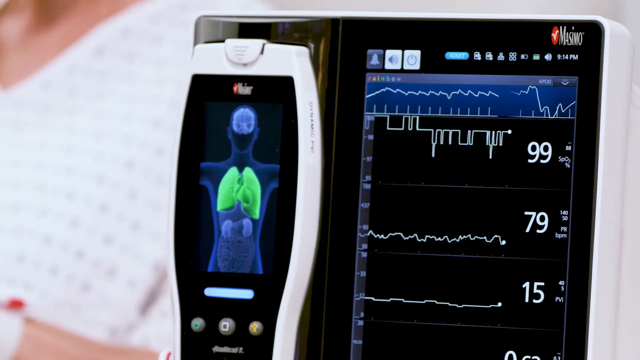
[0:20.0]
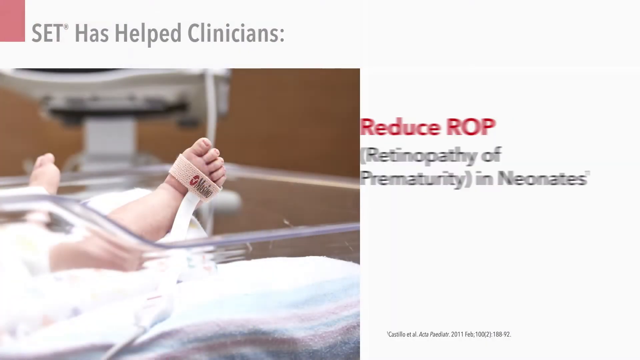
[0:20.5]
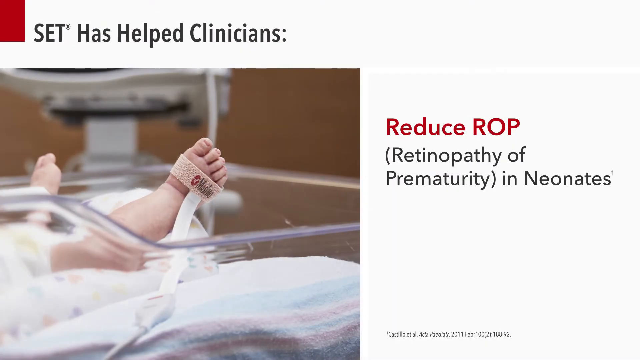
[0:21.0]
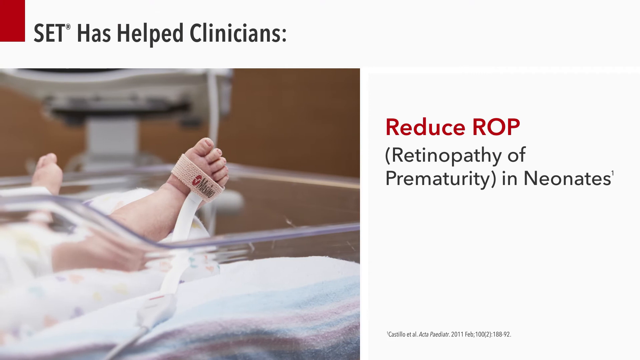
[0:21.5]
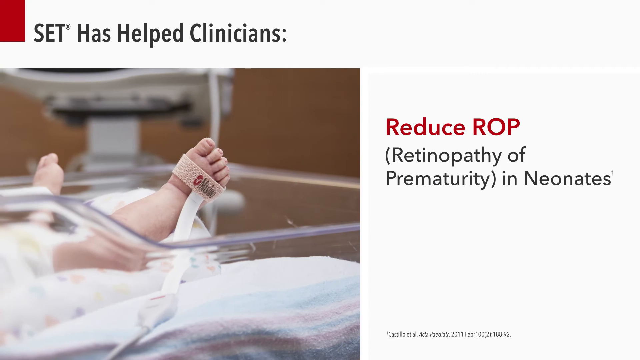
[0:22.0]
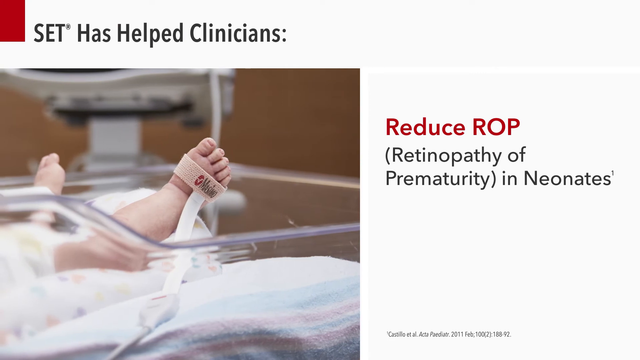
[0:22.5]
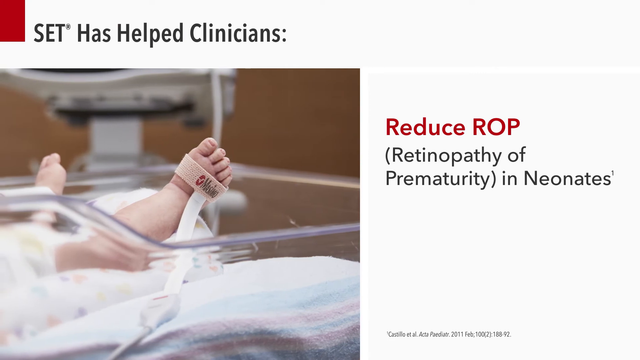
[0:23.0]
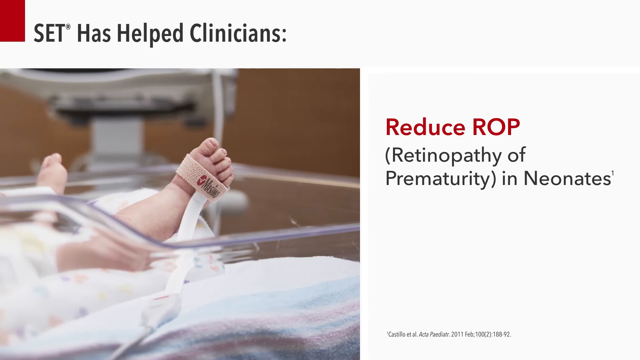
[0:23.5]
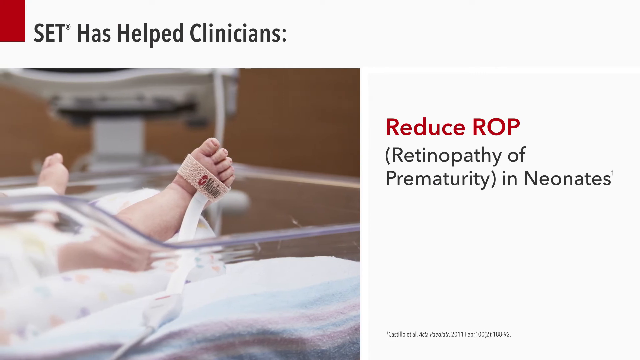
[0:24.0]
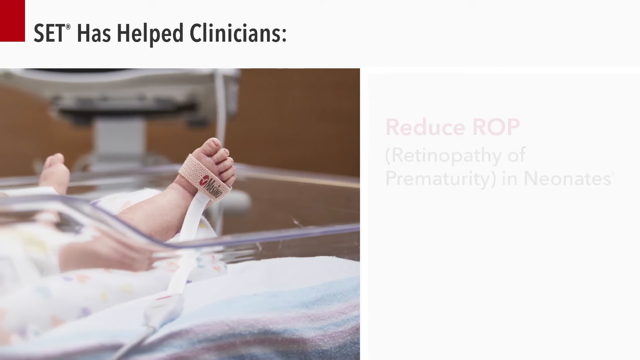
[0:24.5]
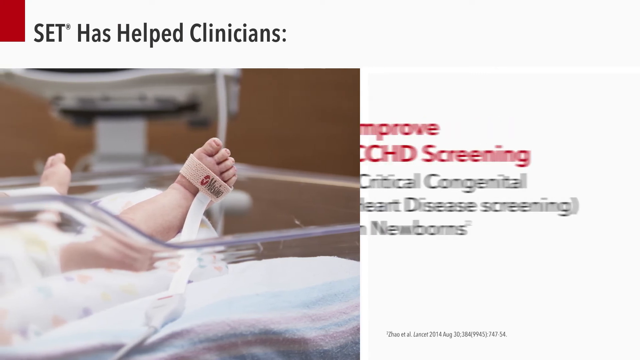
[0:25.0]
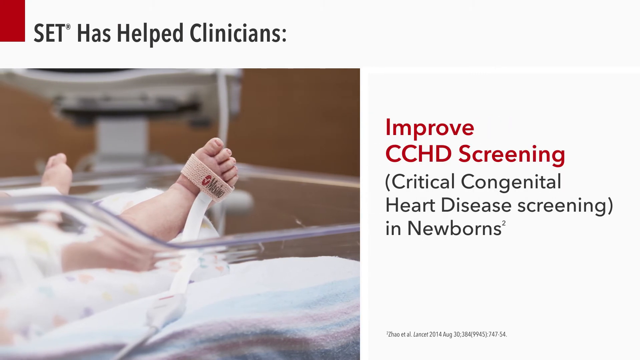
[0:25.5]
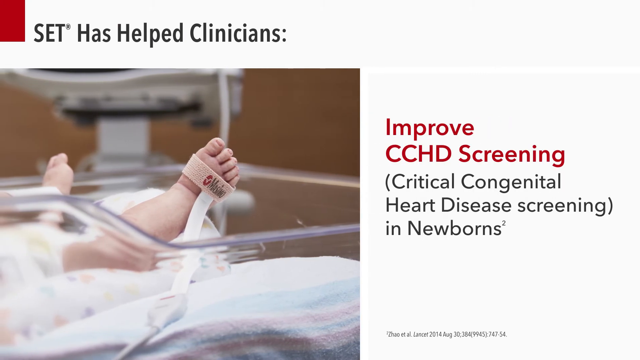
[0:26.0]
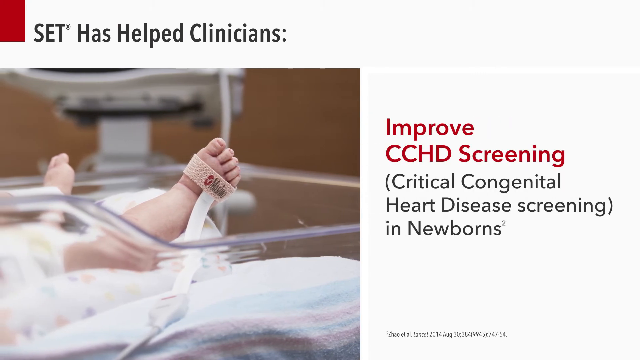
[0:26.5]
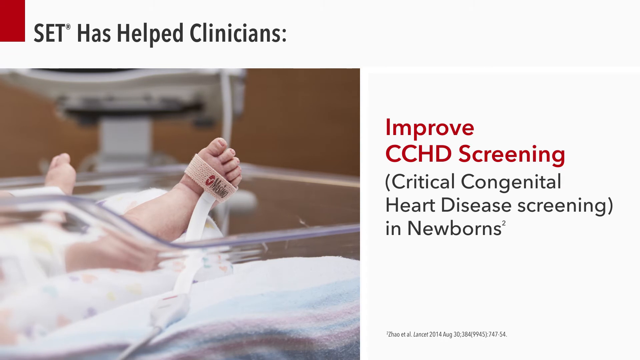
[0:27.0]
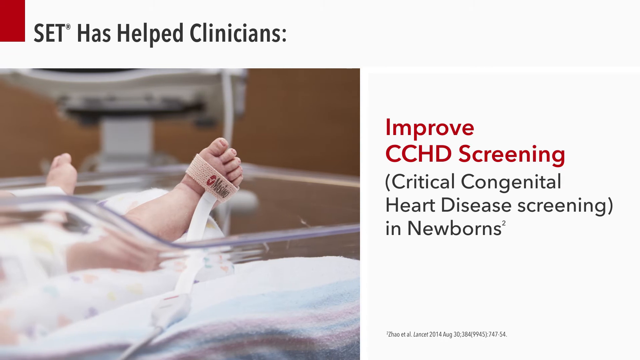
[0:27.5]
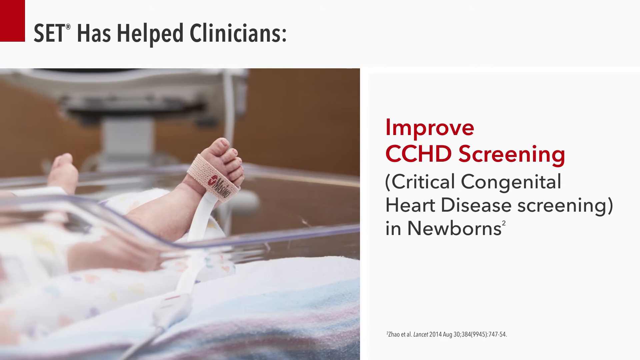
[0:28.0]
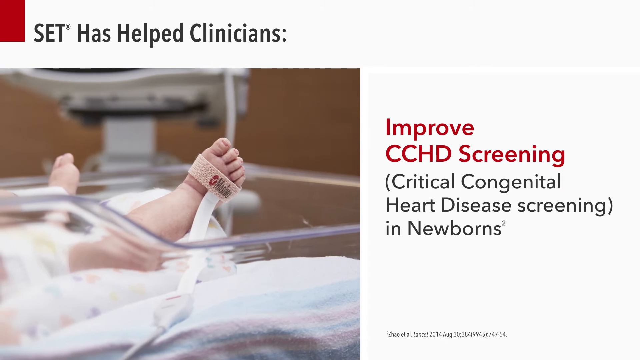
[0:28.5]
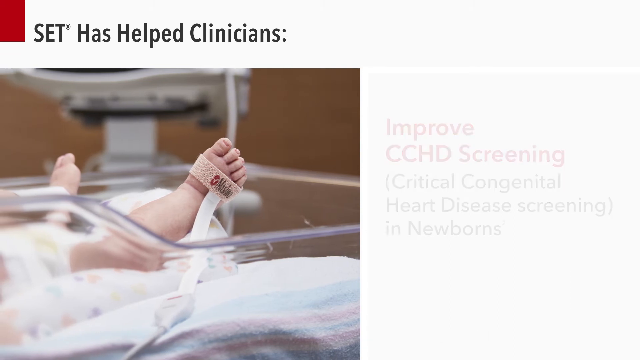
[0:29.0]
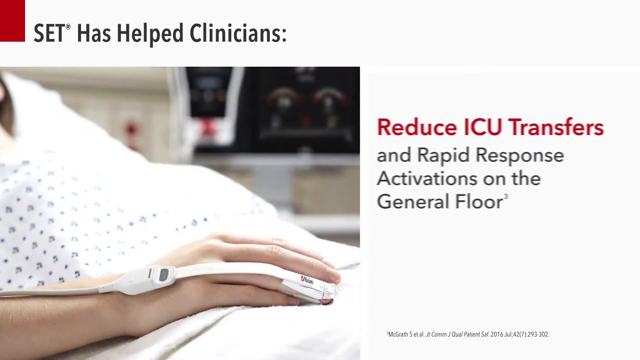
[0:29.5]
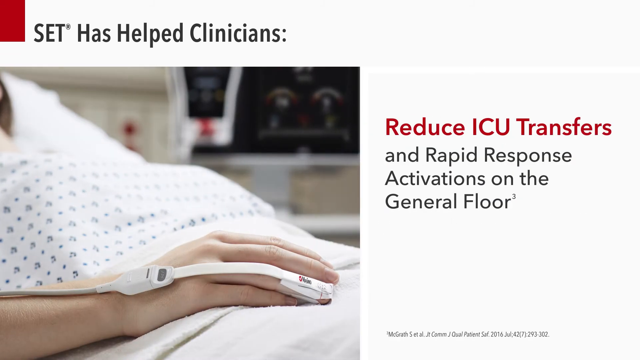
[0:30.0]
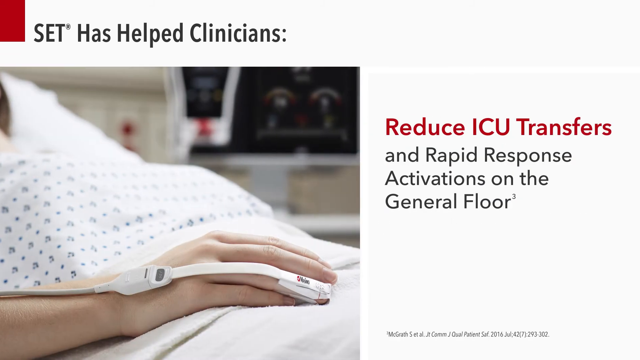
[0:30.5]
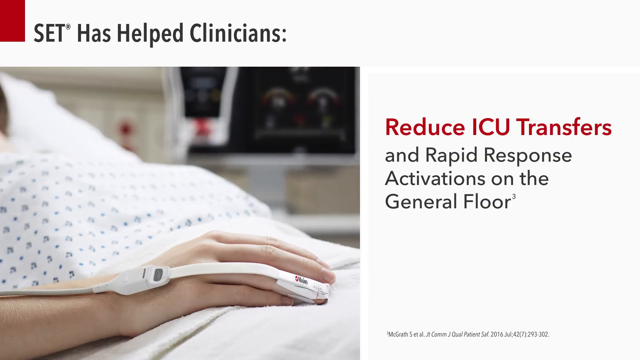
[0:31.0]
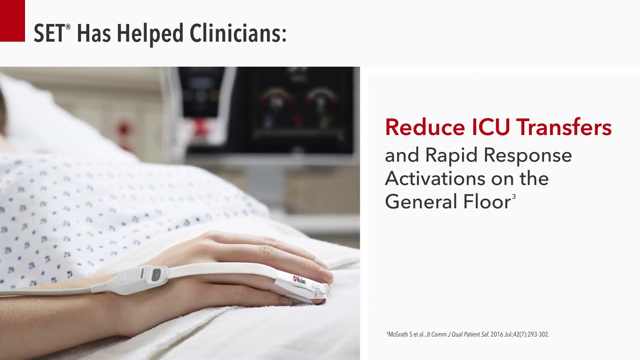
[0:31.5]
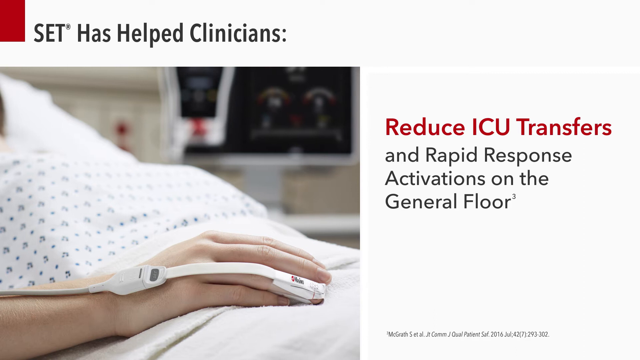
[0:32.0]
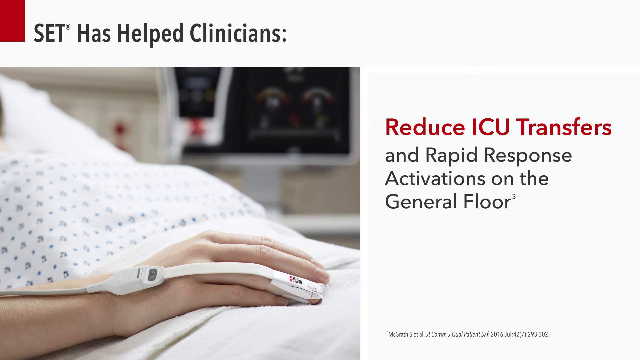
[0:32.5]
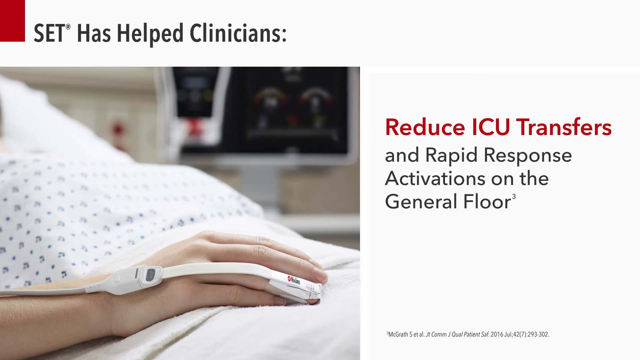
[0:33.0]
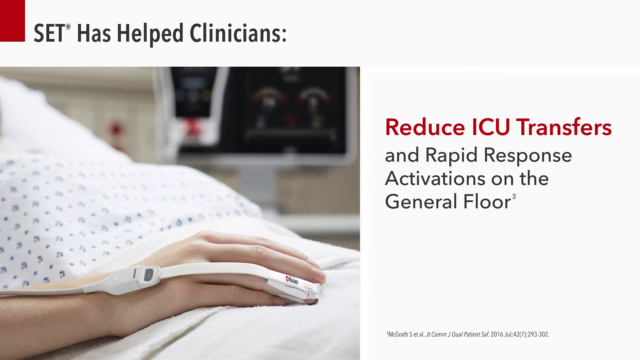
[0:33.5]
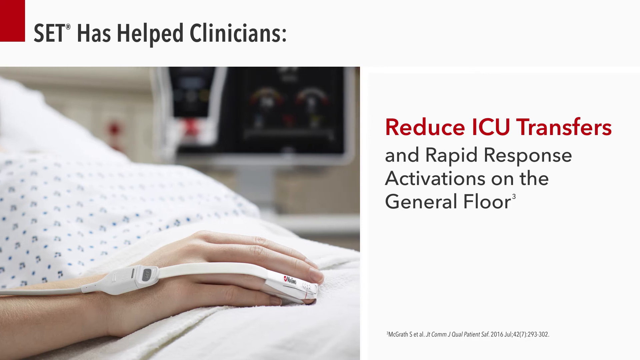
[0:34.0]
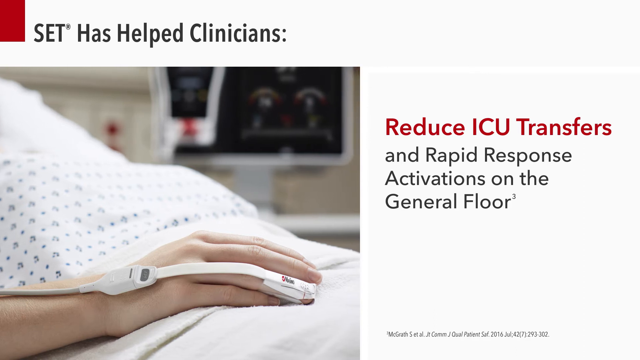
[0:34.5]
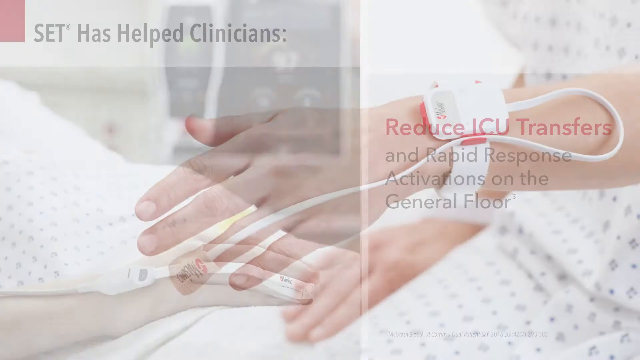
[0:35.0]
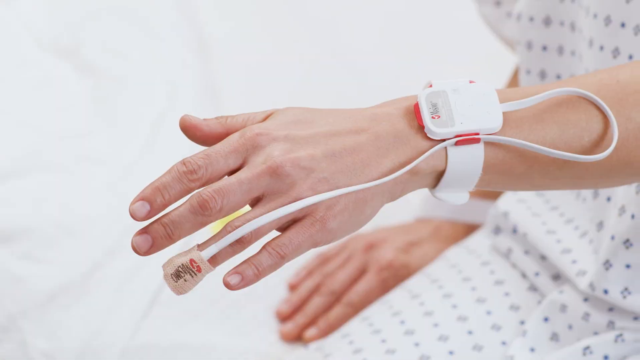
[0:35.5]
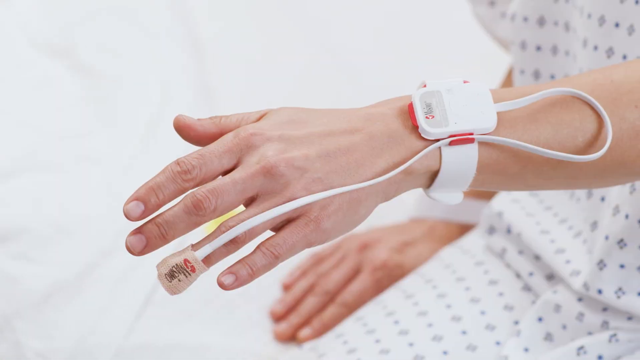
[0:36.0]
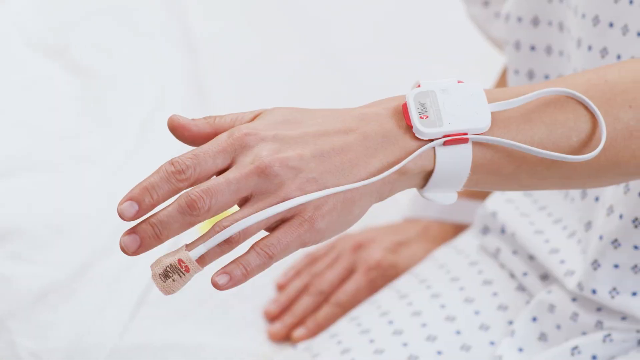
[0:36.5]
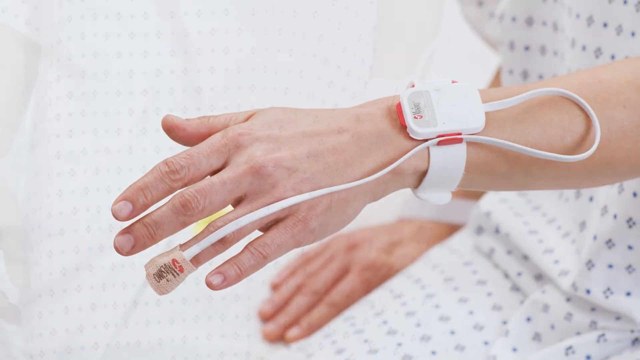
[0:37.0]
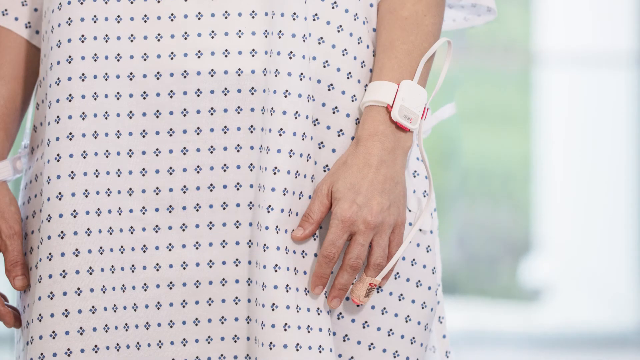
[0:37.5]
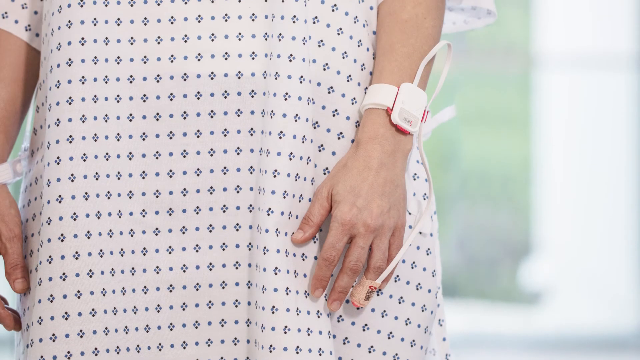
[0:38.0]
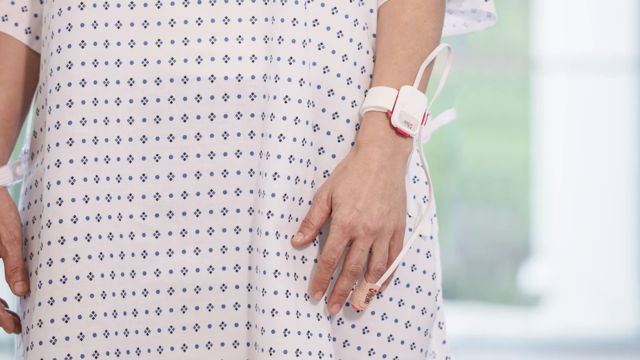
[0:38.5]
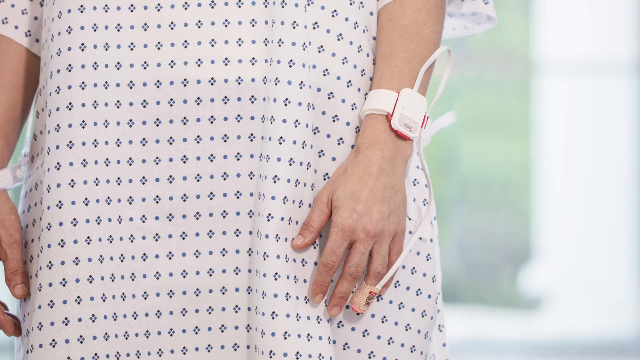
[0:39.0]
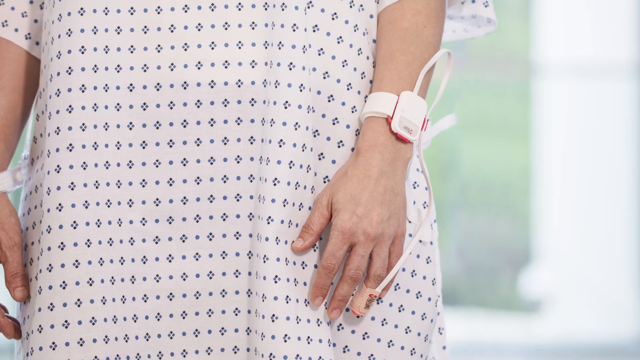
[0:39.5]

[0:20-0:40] A monitor displays a silhouette of a person with the lungs highlighted in green inside the body and the brain shown in blue. On the right side is a chart, kind of a line chart: three line charts with the numbers 99, 74 and 15 next to them. The video cuts to what seems to be a baby with a monitor attached to its right foot; only the baby's legs are visible. Red and black text on the right side reads "reduce ROP. retinopathy of prematurity and neonates". The text changes to "improved CCHD screening, critical congenital heart disease screening in newborns" and then "reduce ICU transfer and rapid response activations on the general floor". Next, a person's left hand is shown with a monitor on the wrist and a wire attached to the left ring finger.